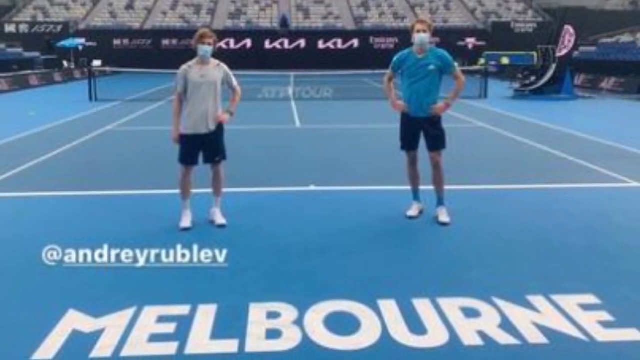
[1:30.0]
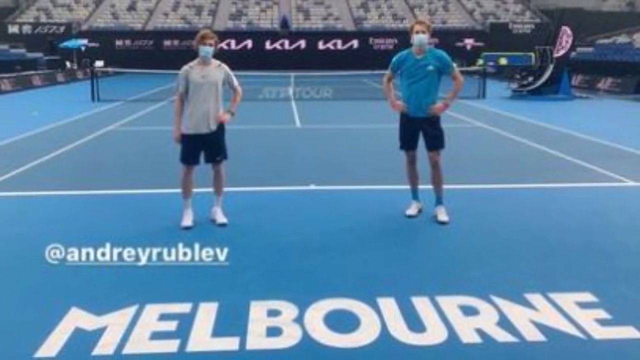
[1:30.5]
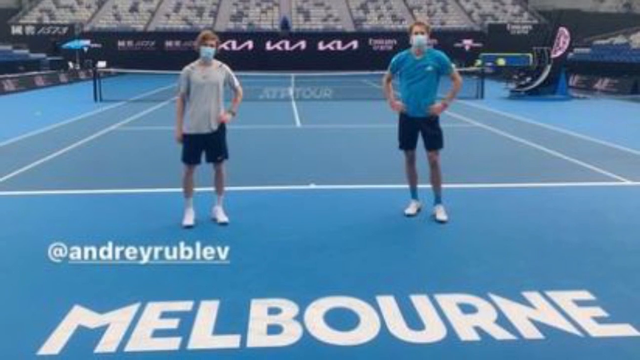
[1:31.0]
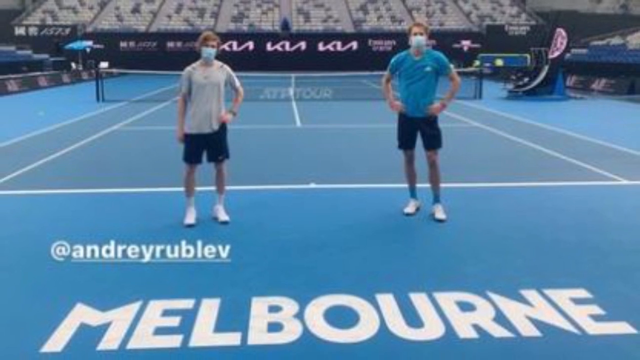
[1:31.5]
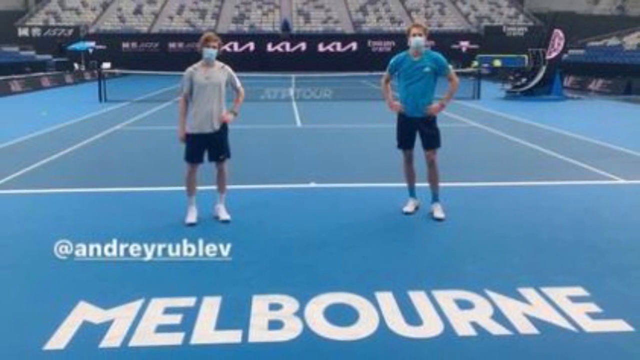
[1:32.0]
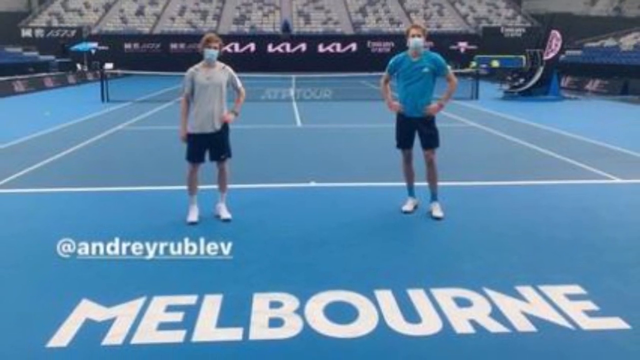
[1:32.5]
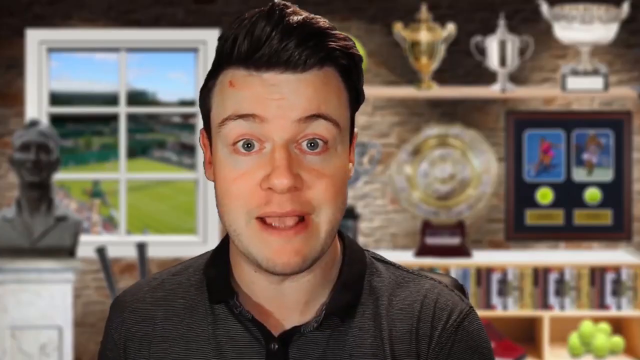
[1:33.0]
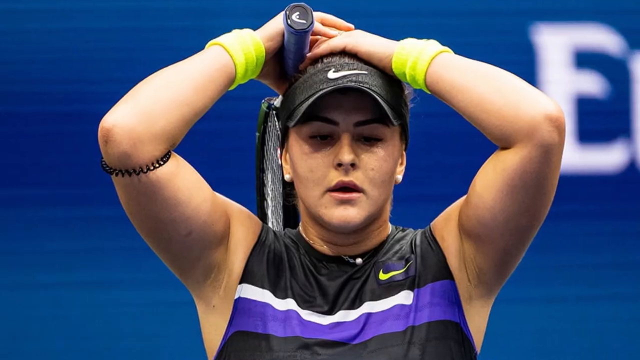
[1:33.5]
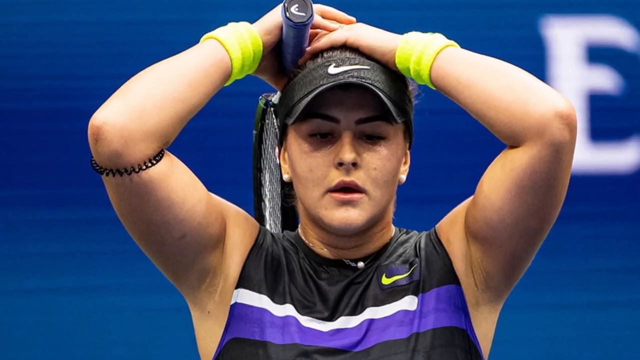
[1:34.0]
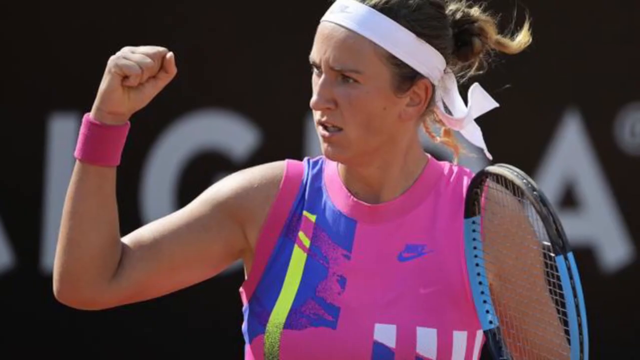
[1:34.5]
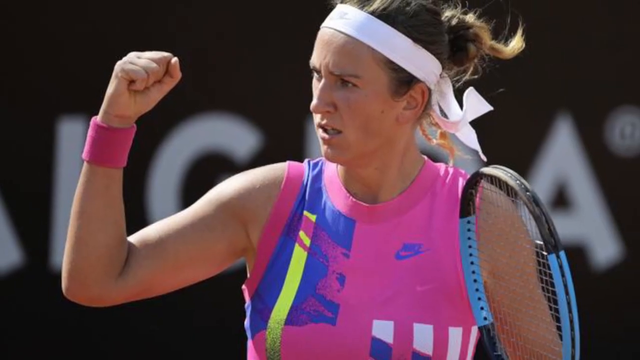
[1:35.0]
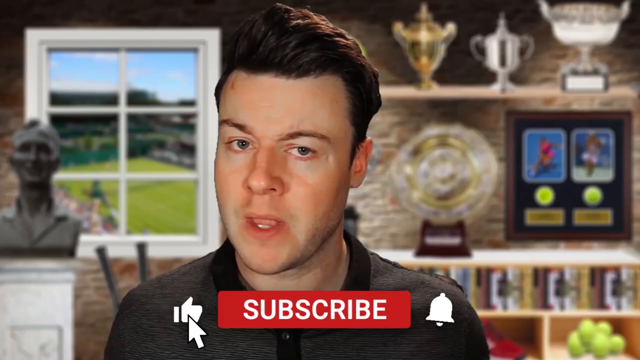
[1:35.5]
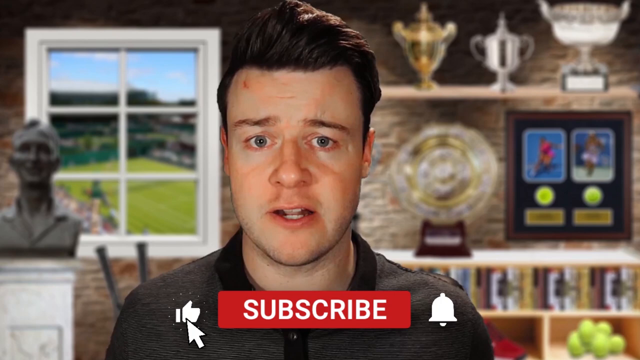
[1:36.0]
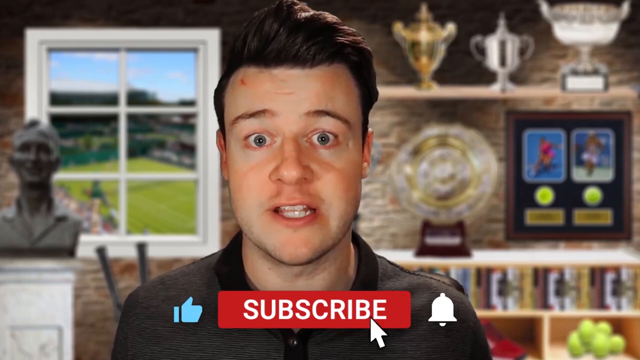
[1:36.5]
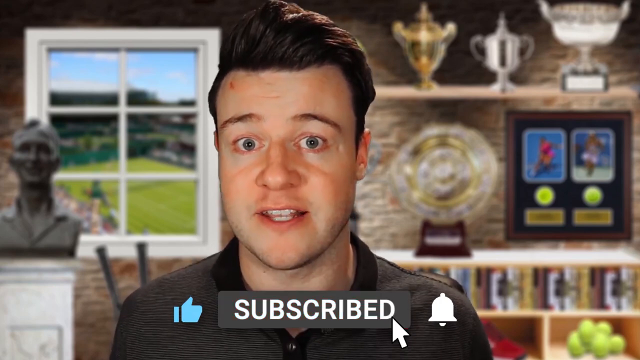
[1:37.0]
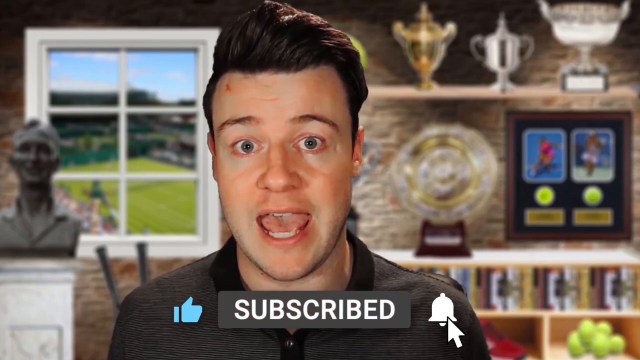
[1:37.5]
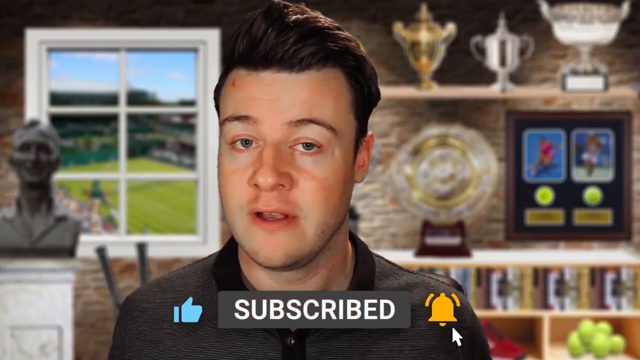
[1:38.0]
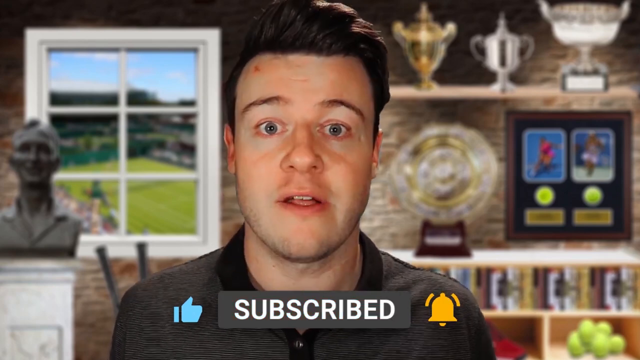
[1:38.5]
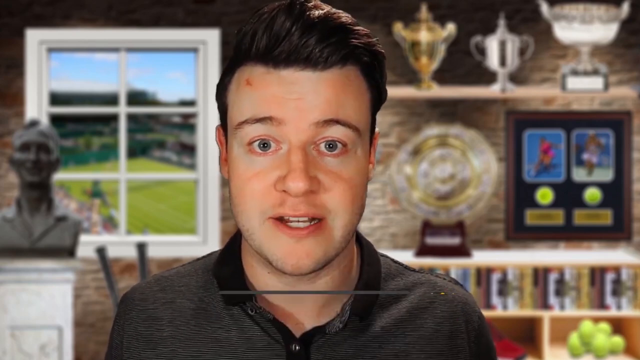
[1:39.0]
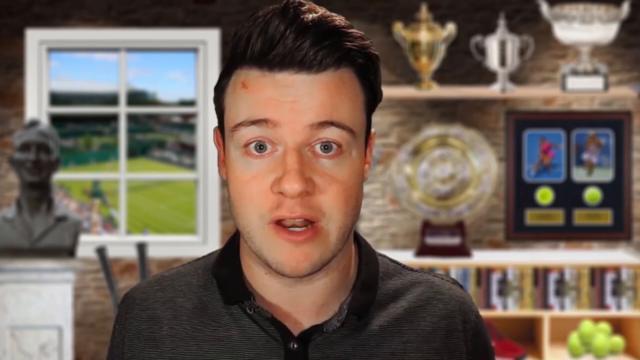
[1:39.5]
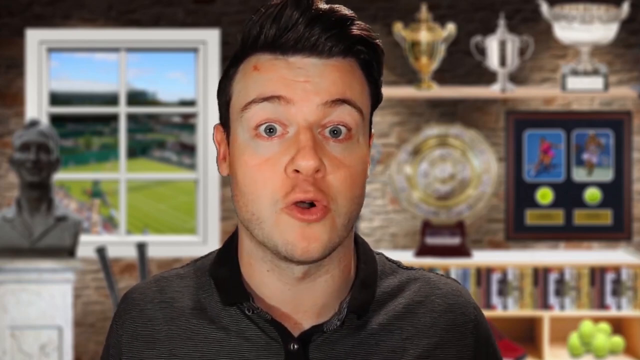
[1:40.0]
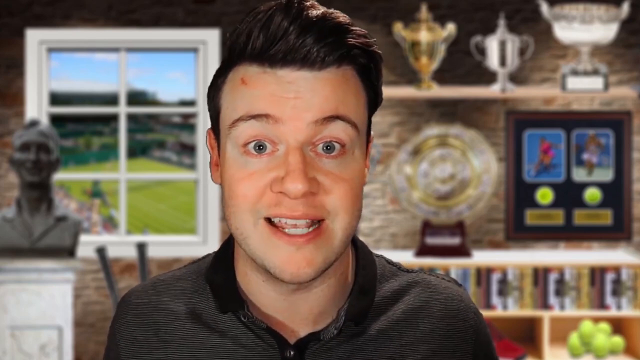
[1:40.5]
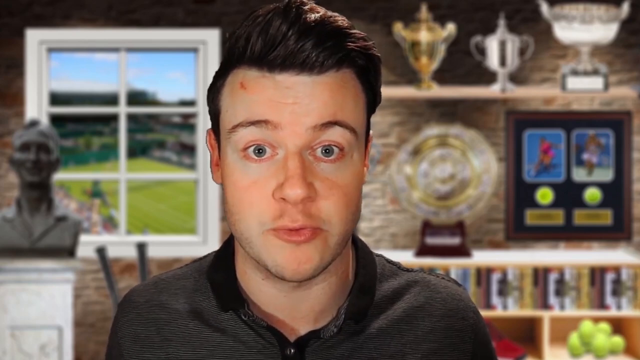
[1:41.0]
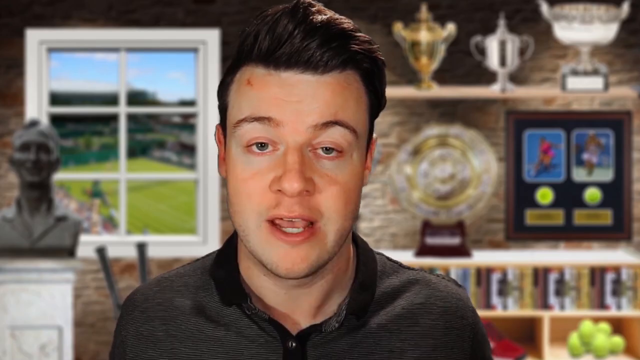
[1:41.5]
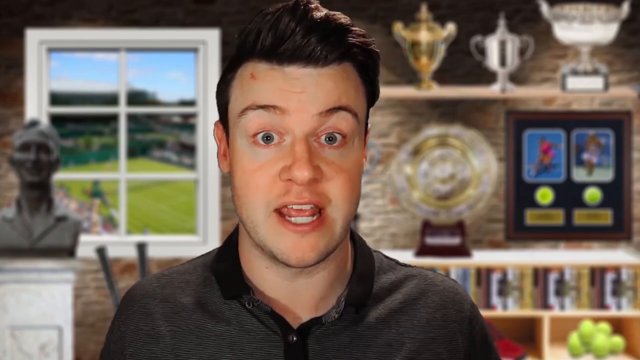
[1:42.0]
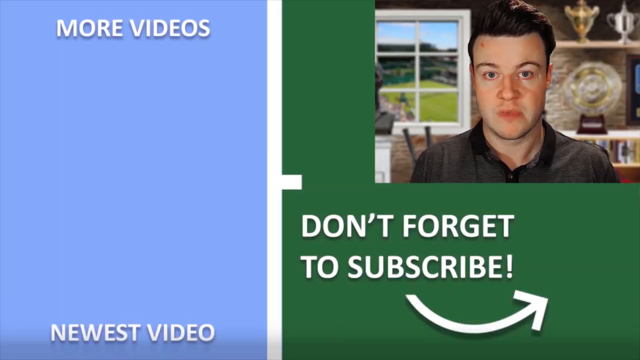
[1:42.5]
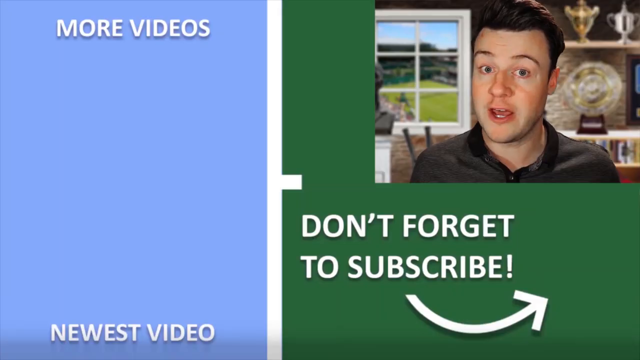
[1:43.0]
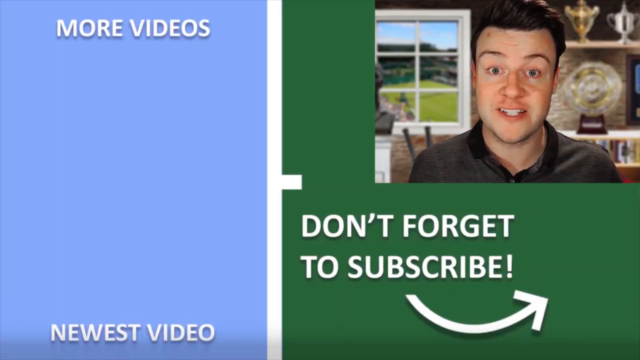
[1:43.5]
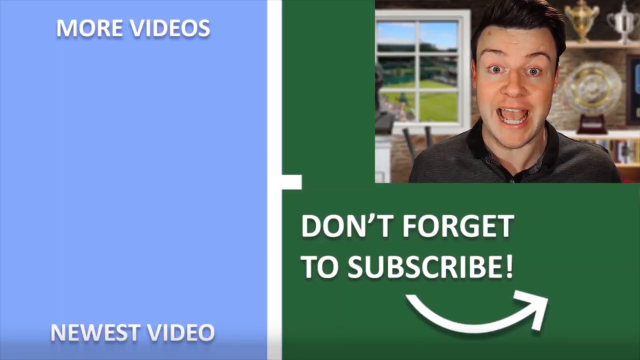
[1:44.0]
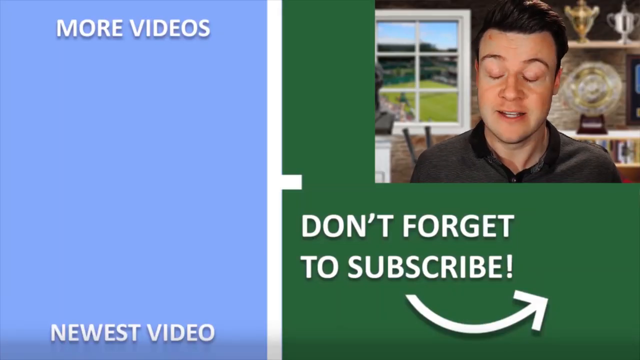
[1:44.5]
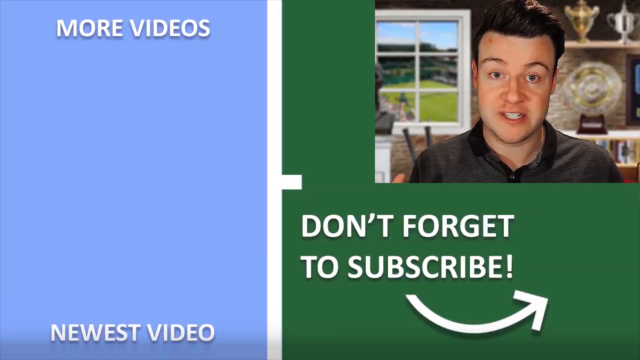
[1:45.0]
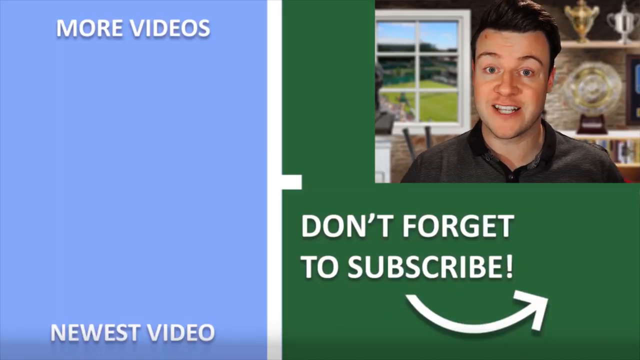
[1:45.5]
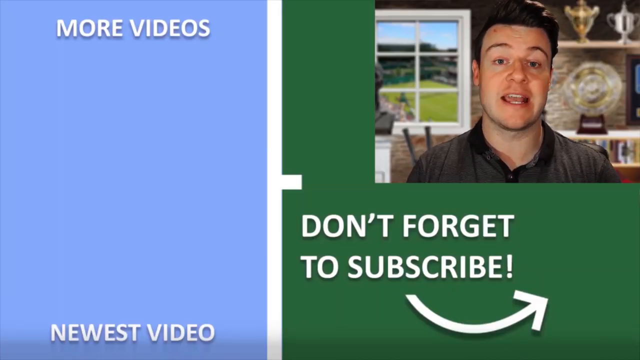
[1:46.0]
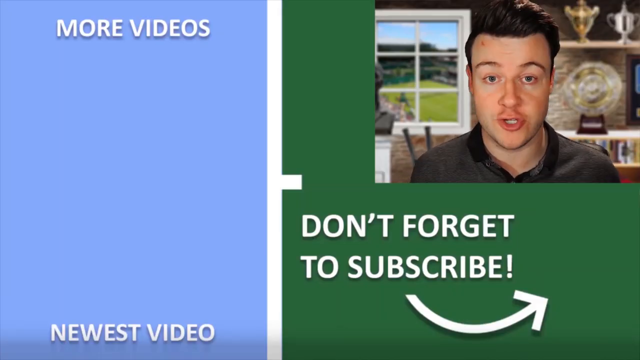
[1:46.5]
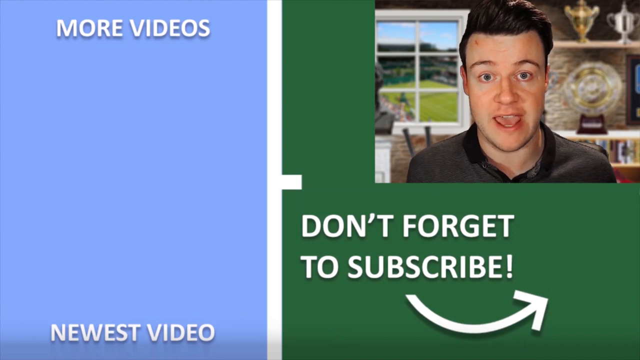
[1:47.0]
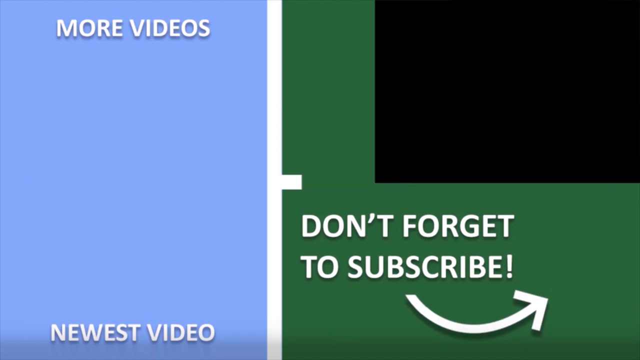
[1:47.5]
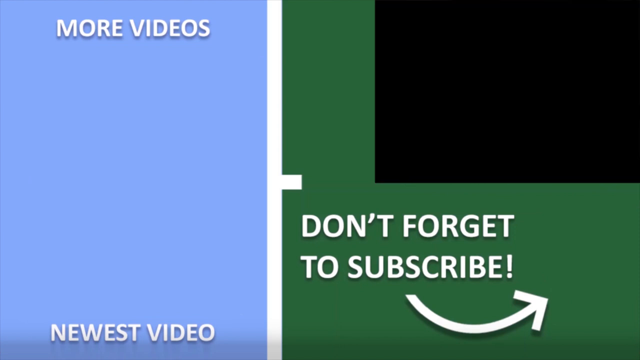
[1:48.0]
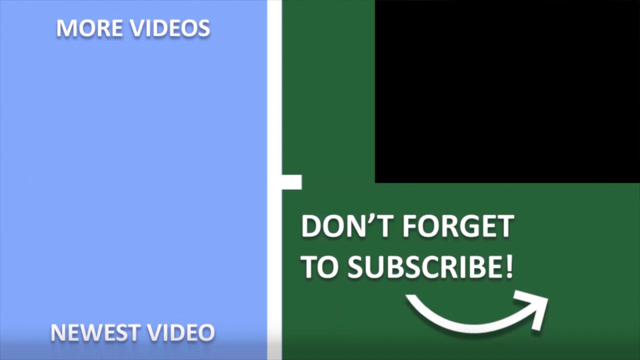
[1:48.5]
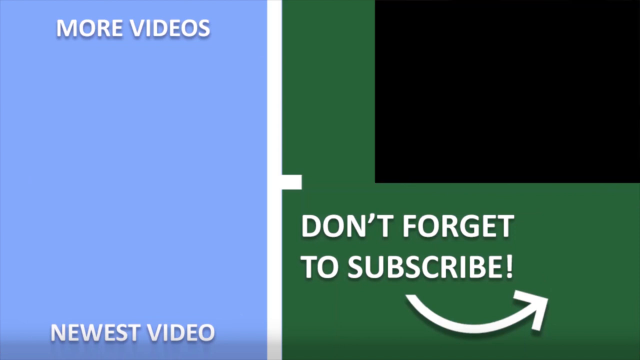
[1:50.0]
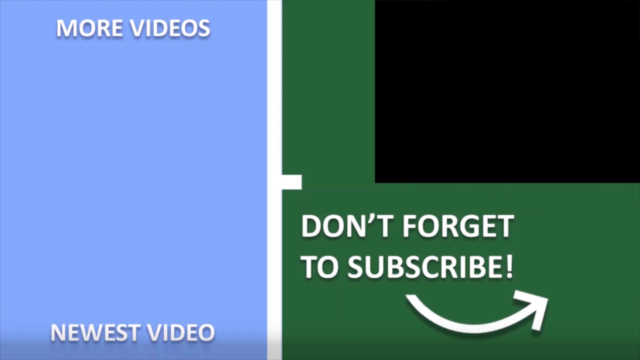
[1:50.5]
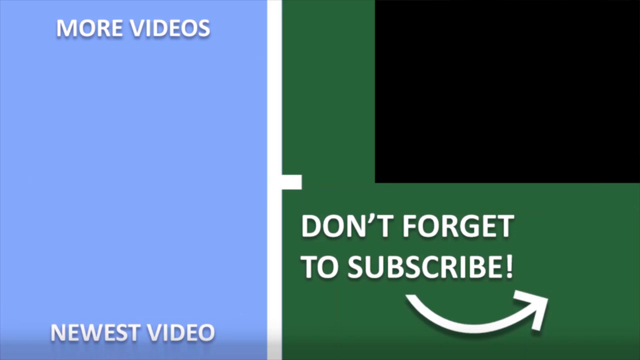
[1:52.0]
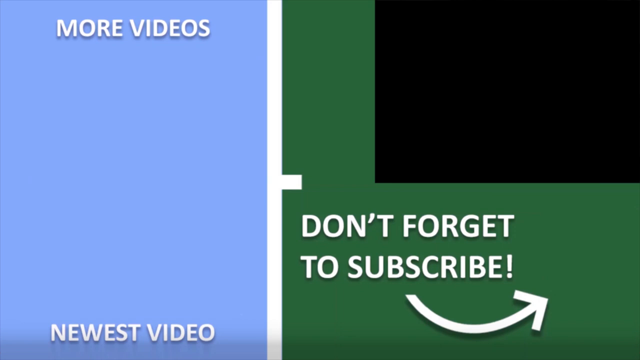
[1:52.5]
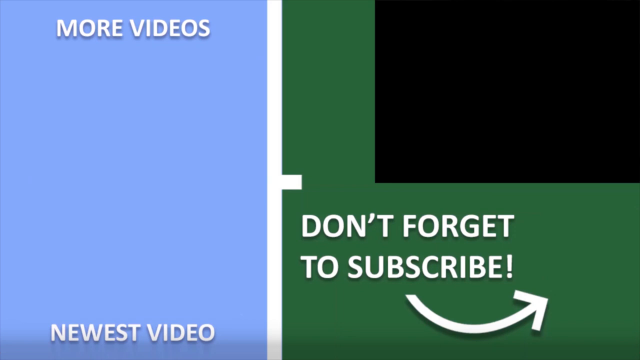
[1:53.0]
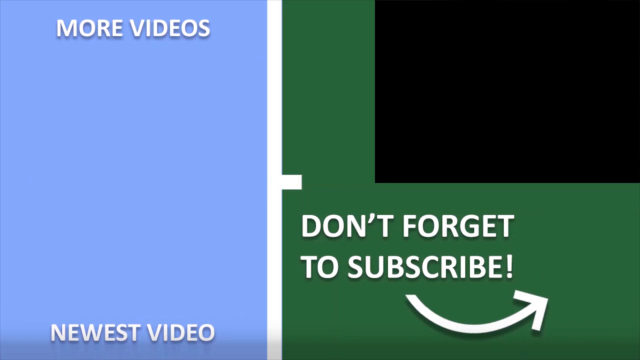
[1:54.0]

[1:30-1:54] Two men stand on a blue tennis court with white lines. At the bottom left is a line of white text that says "at Andre Rublev". The person on the left wears a blue face mask, a gray t-shirt, dark shorts, and white socks and sneakers; the person on the right wears a white face mask, a dark aqua shirt, black shorts, blue socks and white sneakers. The image zooms outwards and then shifts to a man standing in a stone-walled room. Behind him on the left is a white-framed window with a picture of a meadow and a mountain in it, with a bust in front of the window. On the right are two shelves, both with trophies on them, and sports memorabilia lined up underneath. The man is white, has a mole on his right temple and wears dark clothing. He looks directly at the camera, speaking emphatically, his eyebrows raised a couple of times. The image then shifts to a still image of a woman tennis player with a black cap on her head, her hands clasped above her head and her tennis racket in her right hand; she has neon yellow wristbands on both wrists. The next picture shows a woman in a pink and blue sleeveless shirt who also looks like a tennis player. She has a pink wristband on her right wrist, with that hand clenched in a fist and raised up, looking victorious, and a tennis racket on her left. The image zooms out and shifts back to the man in the stone-walled room, who faces the camera and continues to speak. At the bottom of the screen a subscribe indicator appears with a thumbs-up and a bell; a cursor clicks on the subscribe, the bell and the thumbs-up, and they change color. The screen then changes to a picture-in-picture of the man in the top left as he continues to speak. The screen is split in two: the left side is bright blue with a single line of white text at the top that says "more videos", and the right side, where the picture-in-picture is, is surrounded in dark green, with two lines of text at the bottom left reading "don't forget" and "to subscribe".